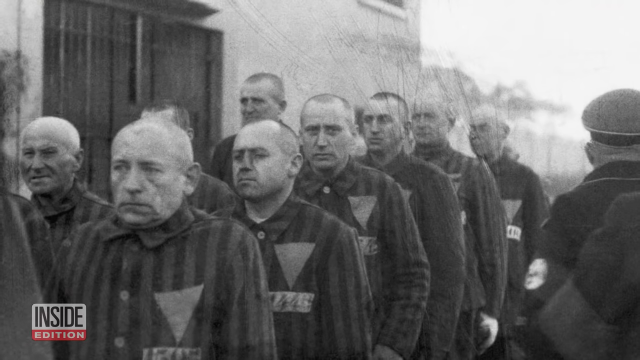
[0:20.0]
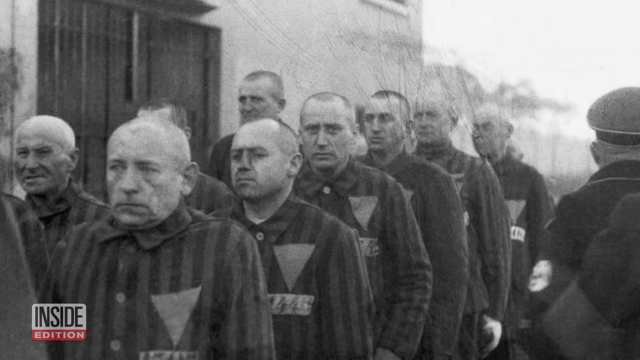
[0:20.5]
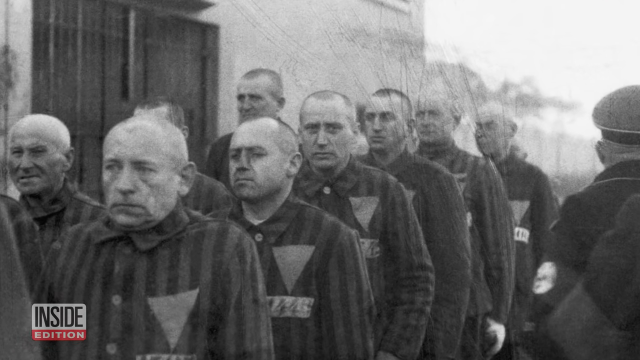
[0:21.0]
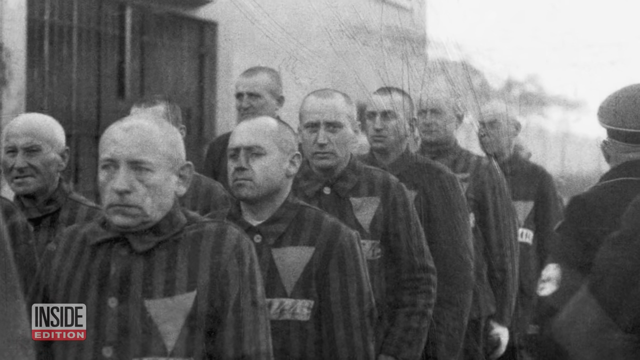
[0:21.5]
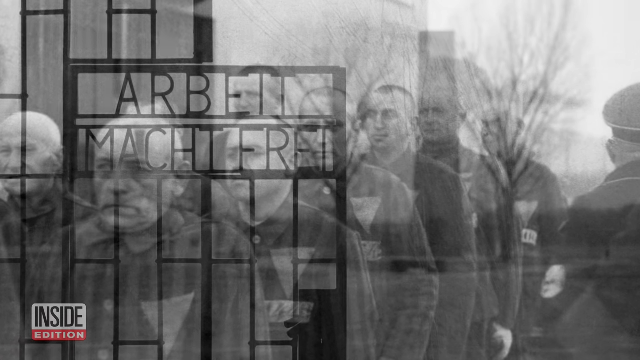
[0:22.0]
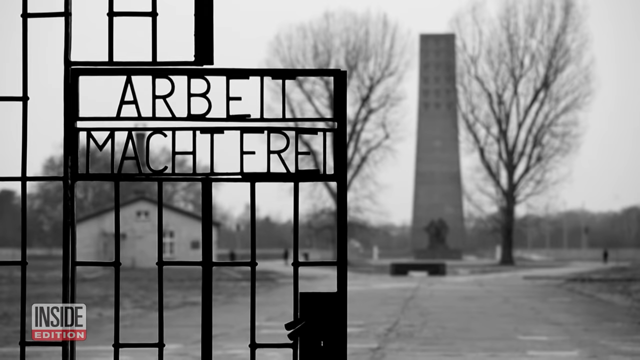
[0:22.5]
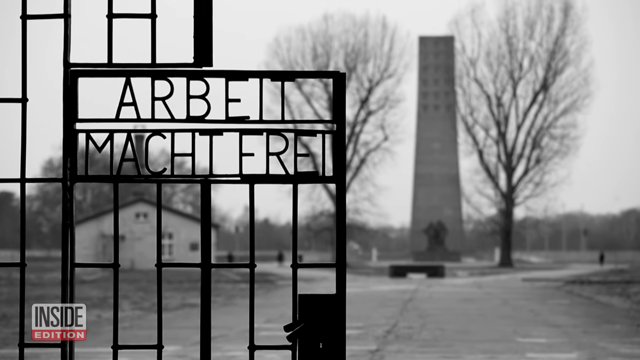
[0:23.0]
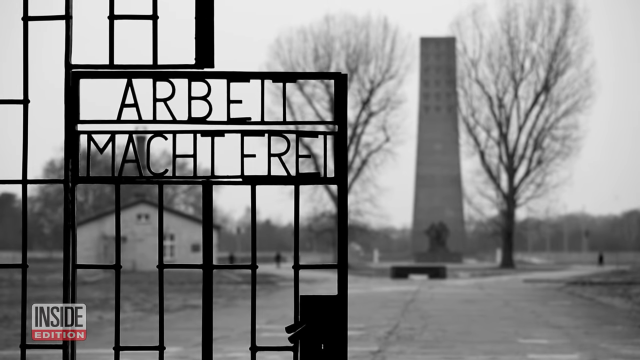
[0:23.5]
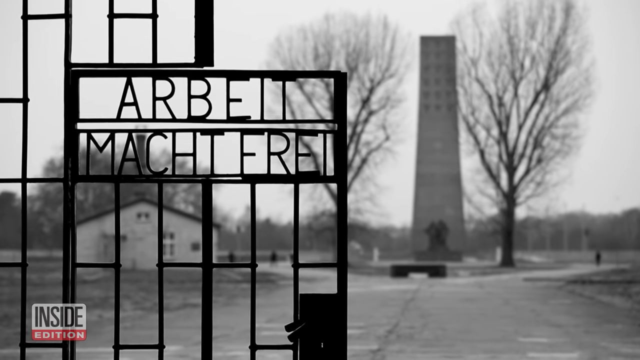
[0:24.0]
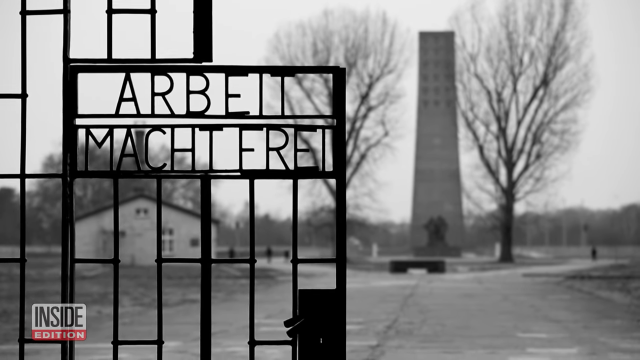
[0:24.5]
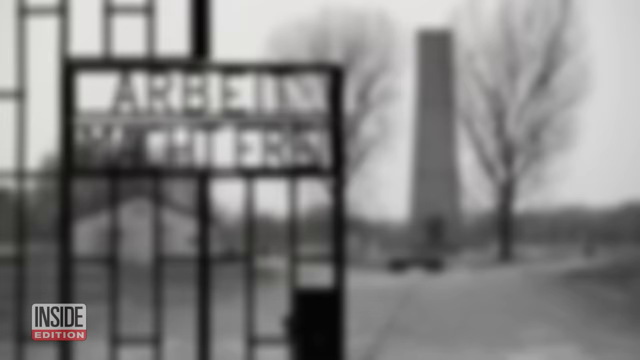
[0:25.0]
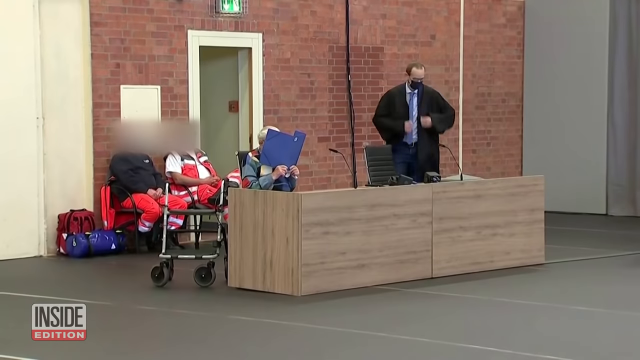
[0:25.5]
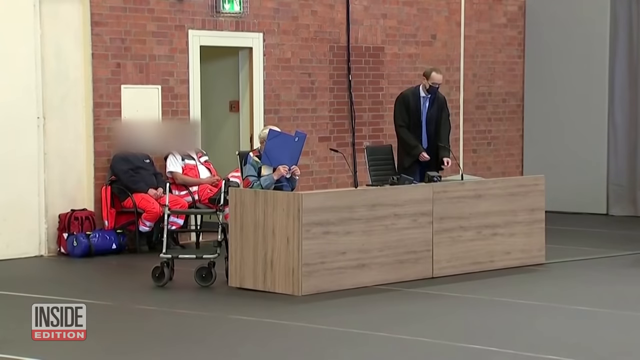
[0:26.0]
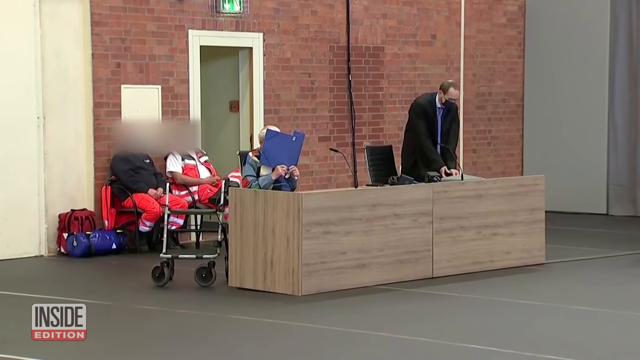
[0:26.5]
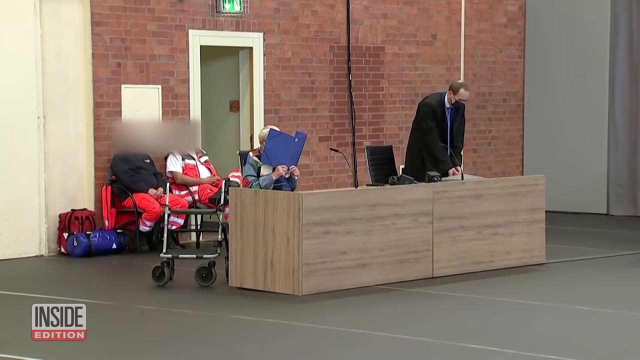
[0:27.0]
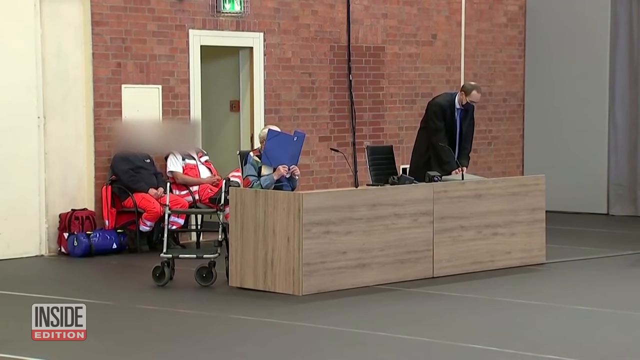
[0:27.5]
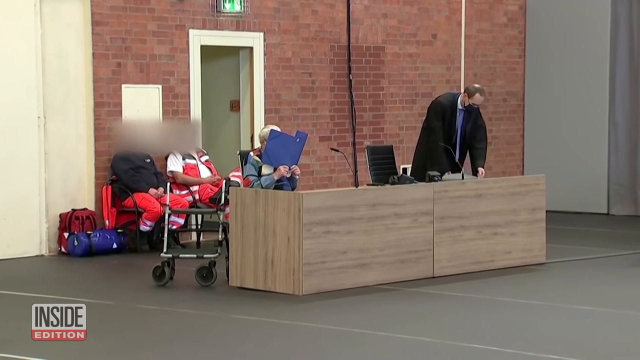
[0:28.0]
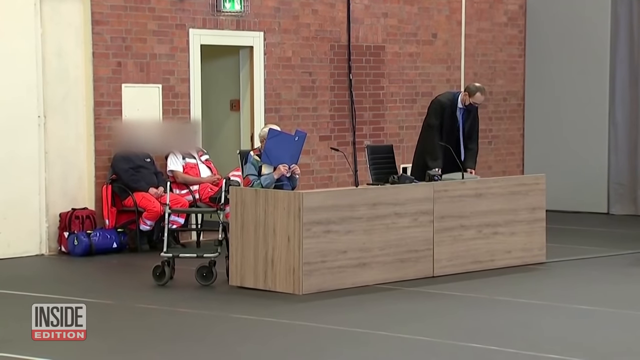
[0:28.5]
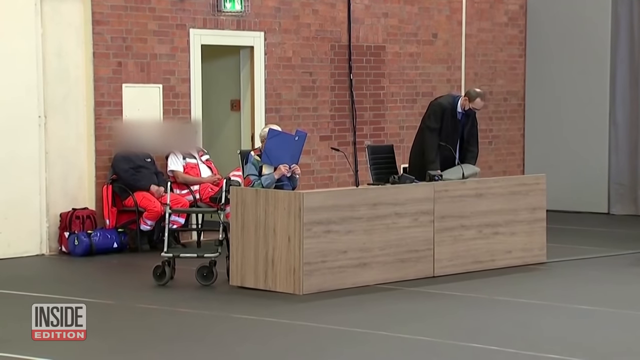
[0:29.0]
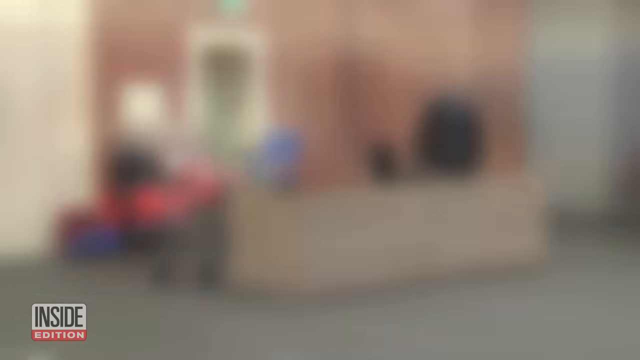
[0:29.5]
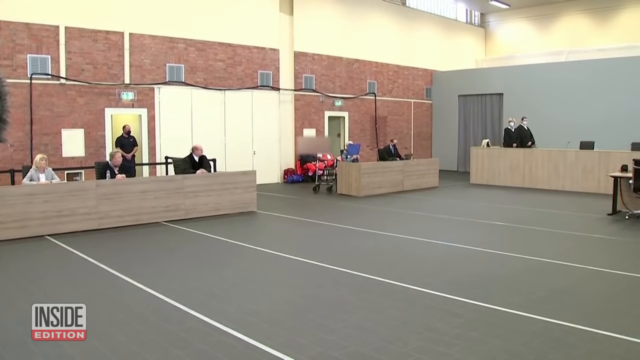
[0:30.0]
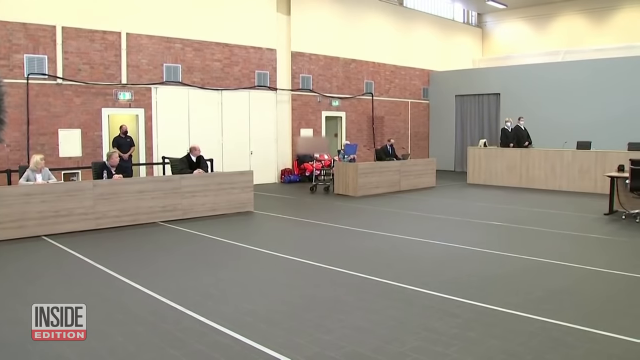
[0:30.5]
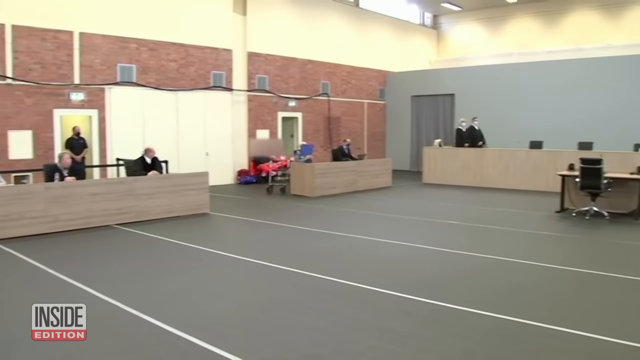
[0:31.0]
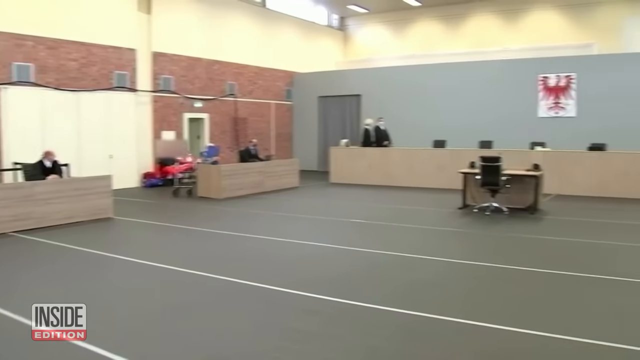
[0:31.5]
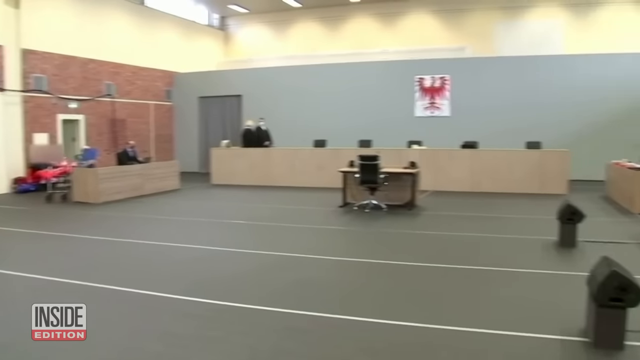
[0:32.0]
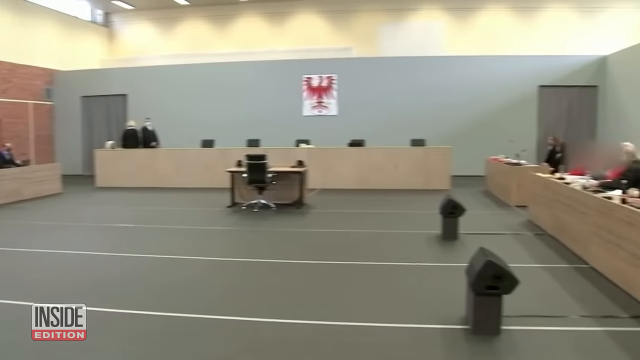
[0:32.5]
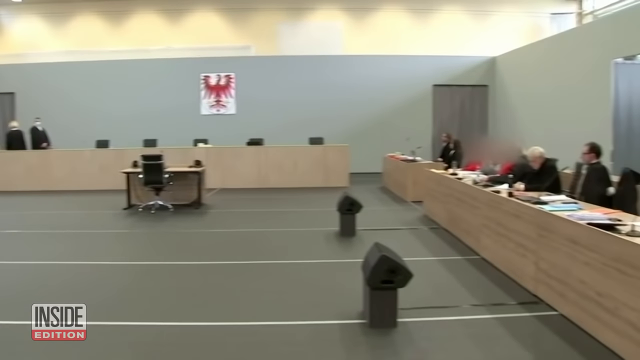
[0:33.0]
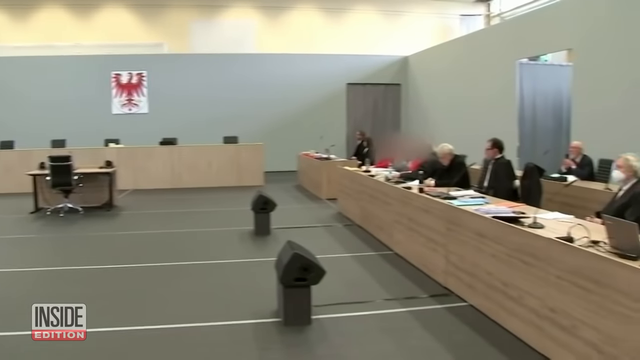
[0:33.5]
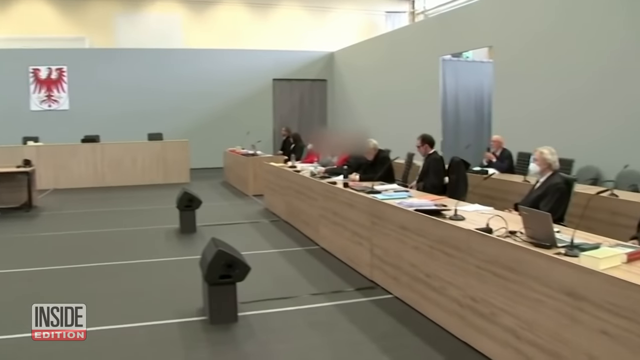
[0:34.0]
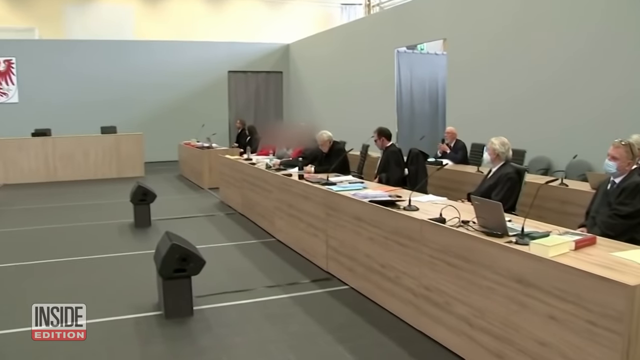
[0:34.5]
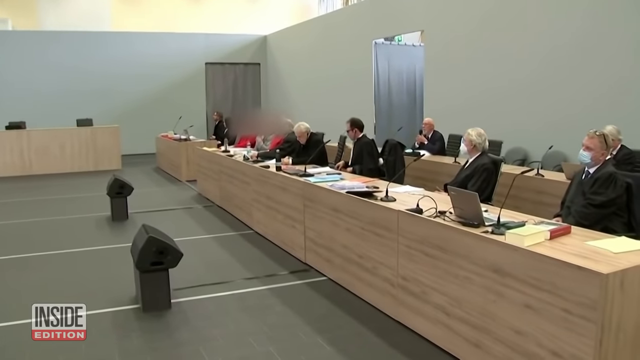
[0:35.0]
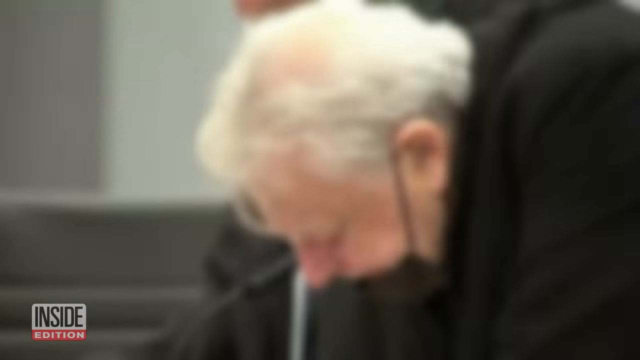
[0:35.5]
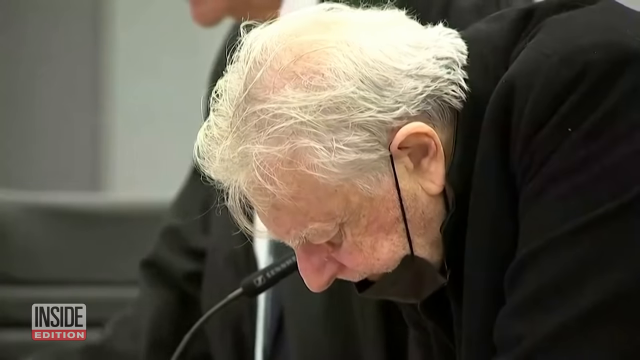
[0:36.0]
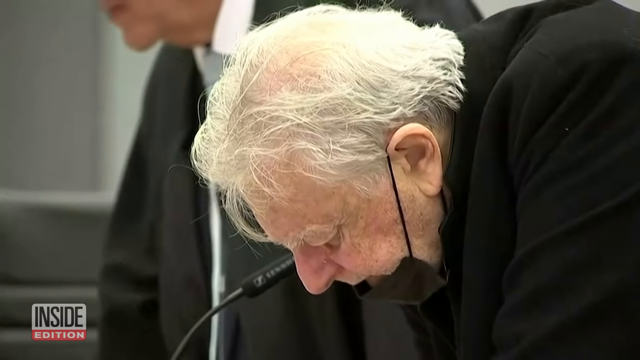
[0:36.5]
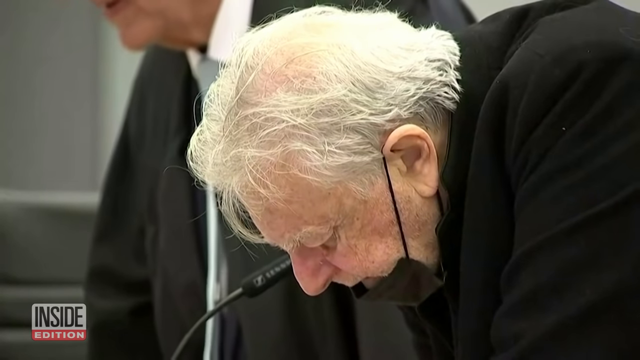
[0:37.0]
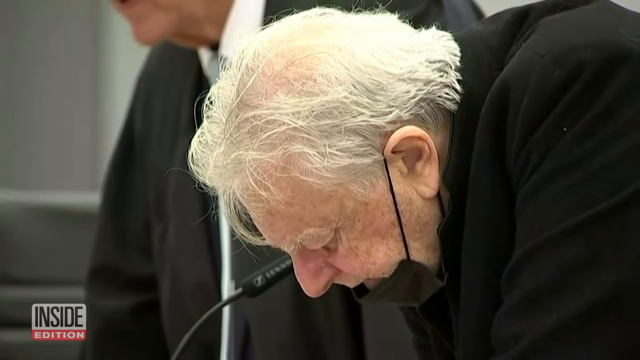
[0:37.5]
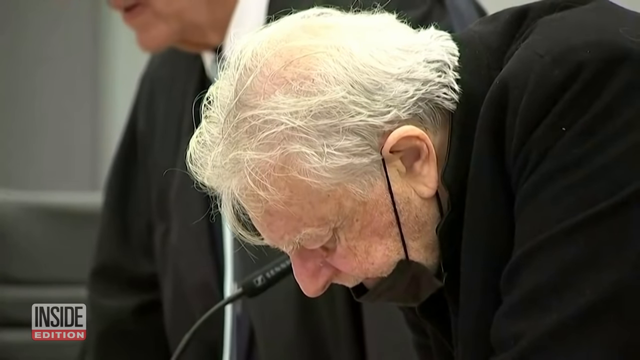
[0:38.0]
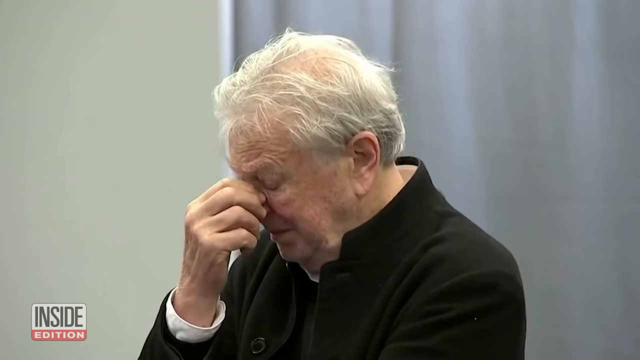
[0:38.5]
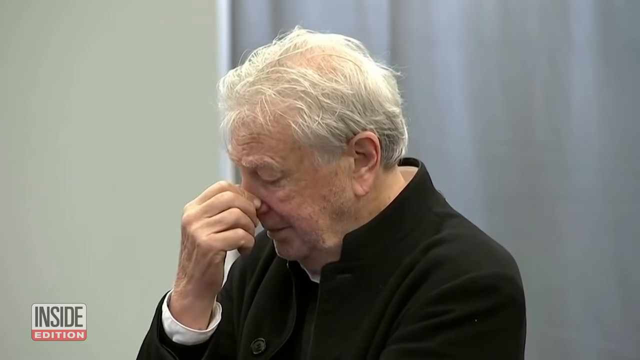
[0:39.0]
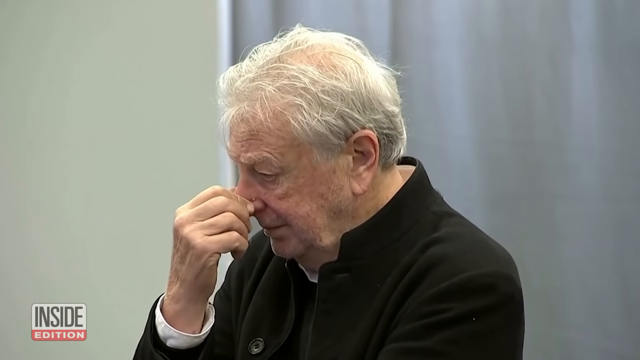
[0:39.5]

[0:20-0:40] Two black and white photos of a German internment camp are shown. The first shows two lines of prisoners in gray jumpsuits with gray vertical stripes. The jumpsuits have a triangle on the left-hand side, and underneath that triangle is a four-digit prisoner number. Guards are walking beside them. The next photo shows the gates of a facility; in the background there is a large brick chimney as tall as the trees, which could be a crematorium, and a white shed. After the two photos, a gathering is shown taking place in a large room. The room has plain smooth floors, plain gray walls on two sides and a plain brick wall on one side. On the back wall is a poster with a large red bird outlined. The outside of the room is lined with wooden tables with wooden boxes around them and black seats at them. Many people are already seated. Microphones are along the tables, which appear to be set up for speakers. The center of the room is left open and empty.